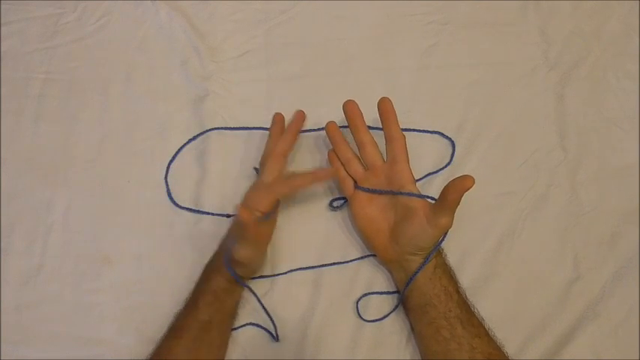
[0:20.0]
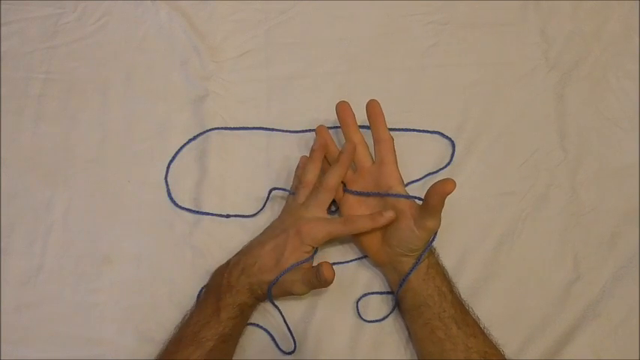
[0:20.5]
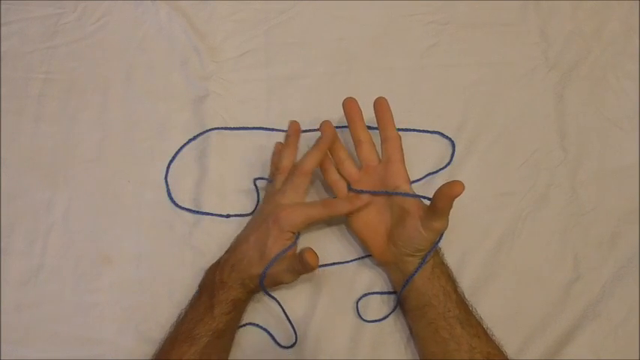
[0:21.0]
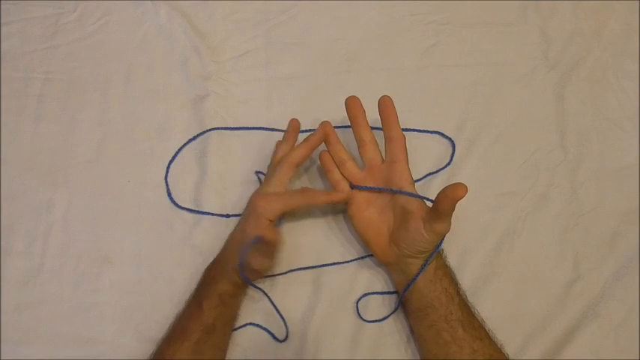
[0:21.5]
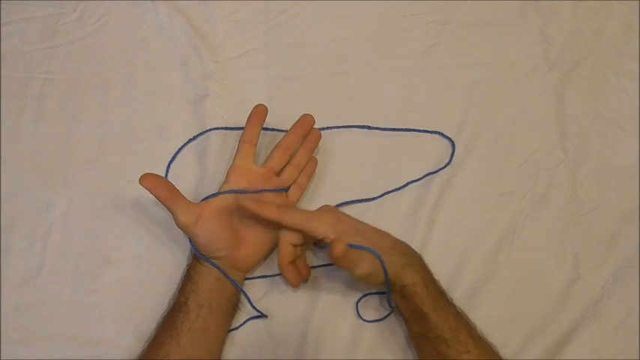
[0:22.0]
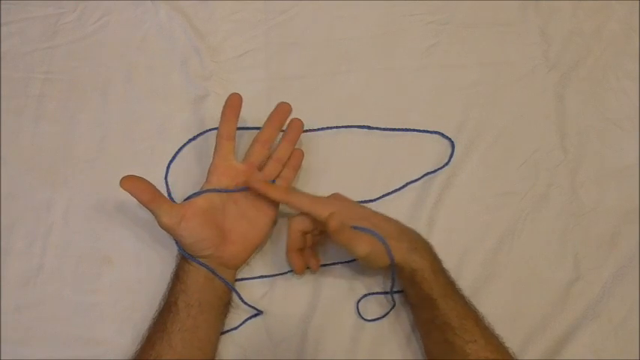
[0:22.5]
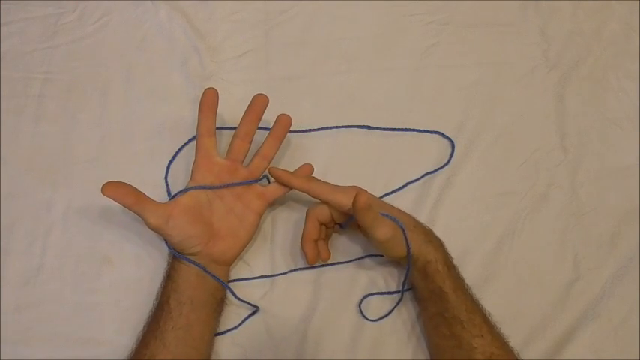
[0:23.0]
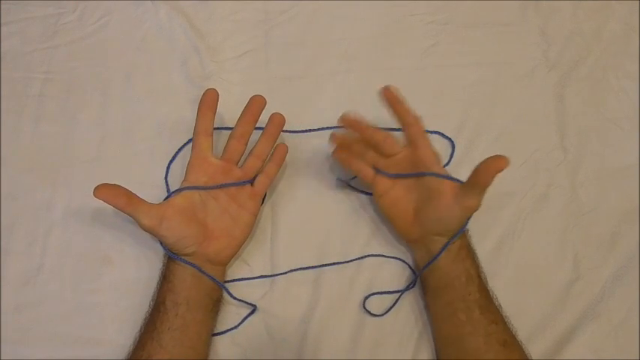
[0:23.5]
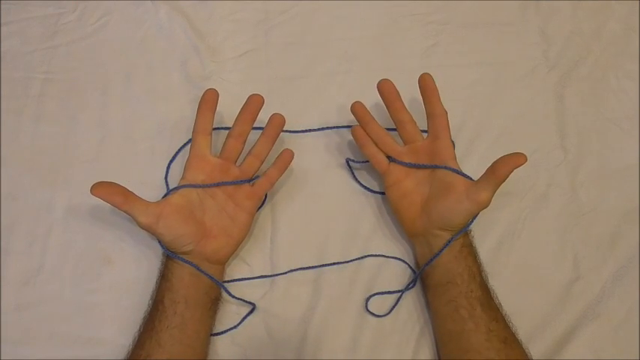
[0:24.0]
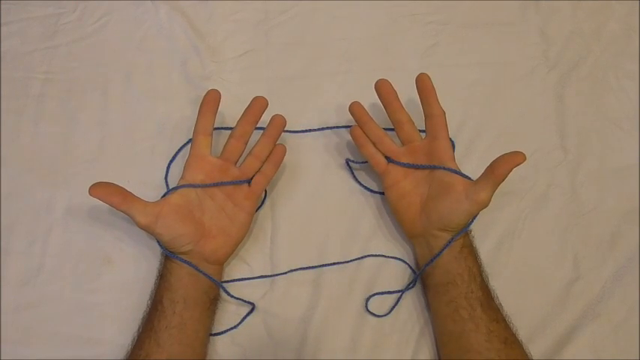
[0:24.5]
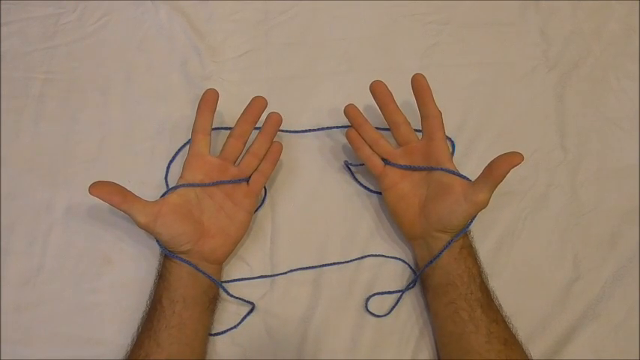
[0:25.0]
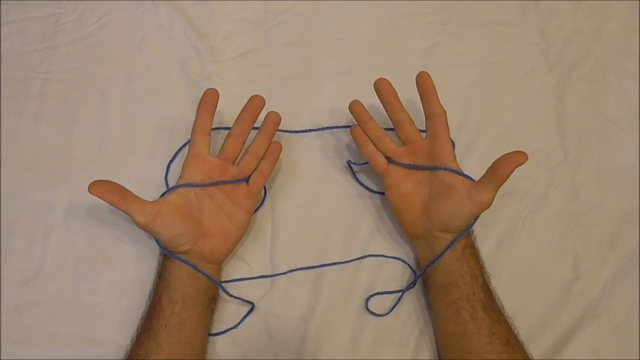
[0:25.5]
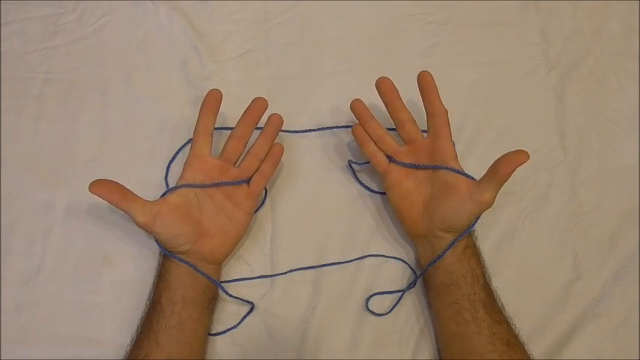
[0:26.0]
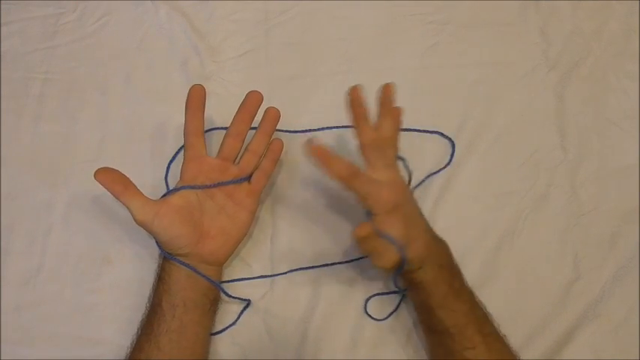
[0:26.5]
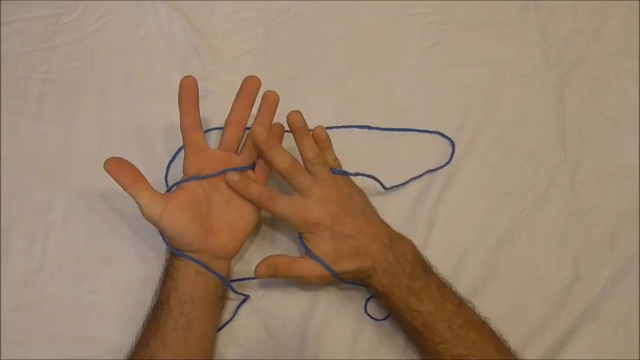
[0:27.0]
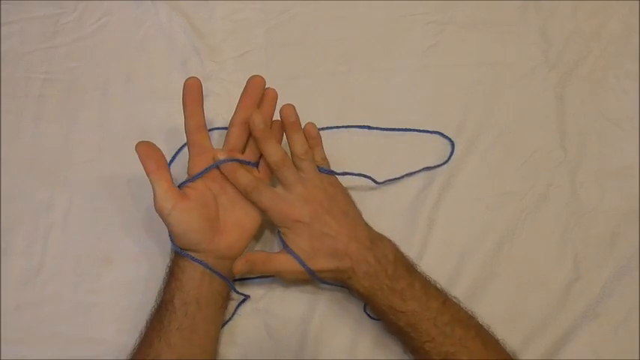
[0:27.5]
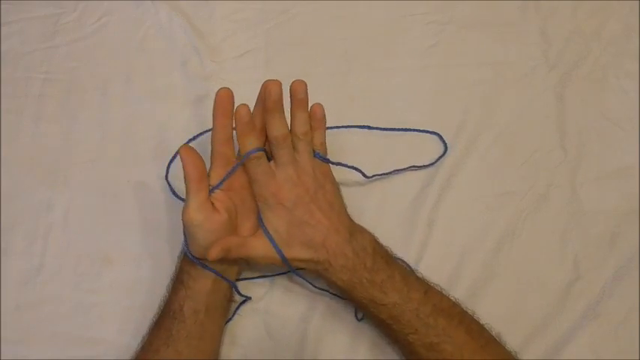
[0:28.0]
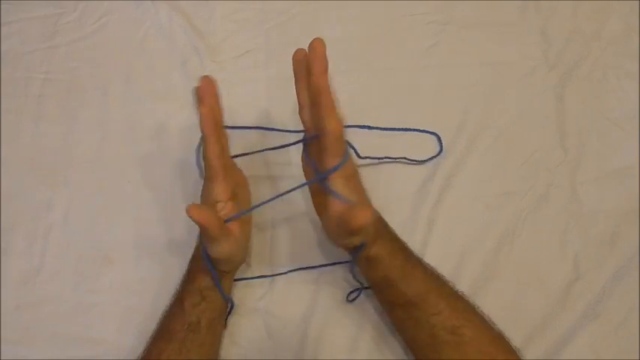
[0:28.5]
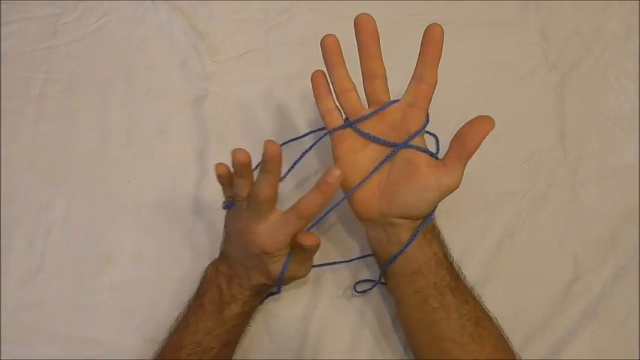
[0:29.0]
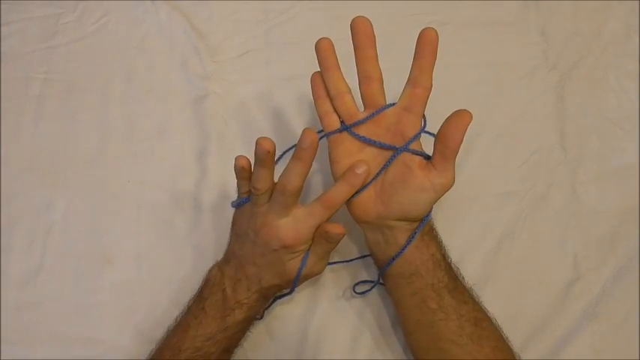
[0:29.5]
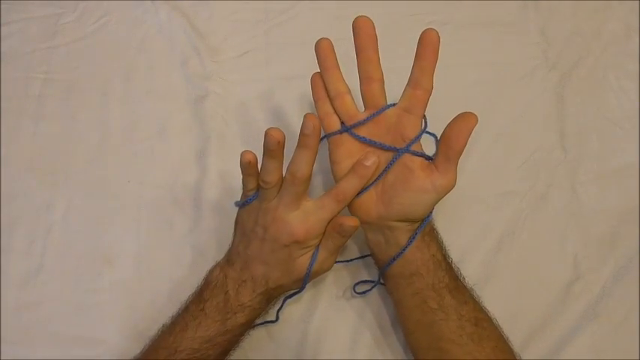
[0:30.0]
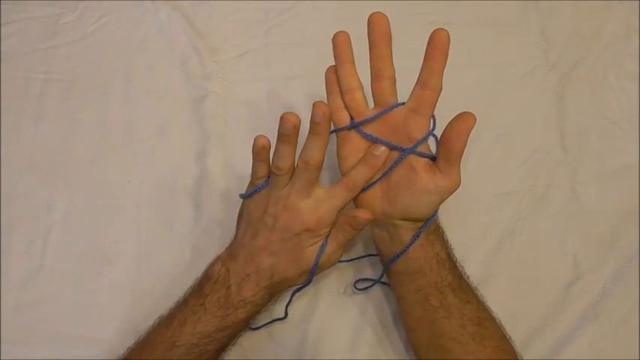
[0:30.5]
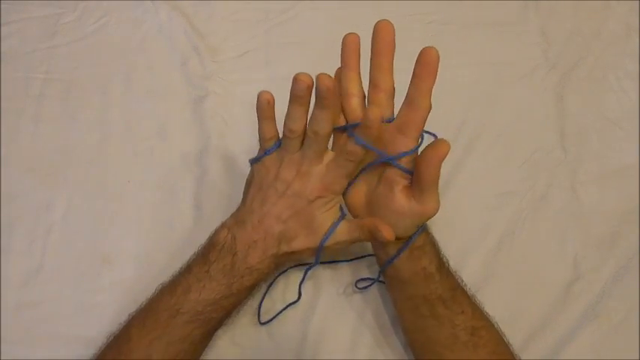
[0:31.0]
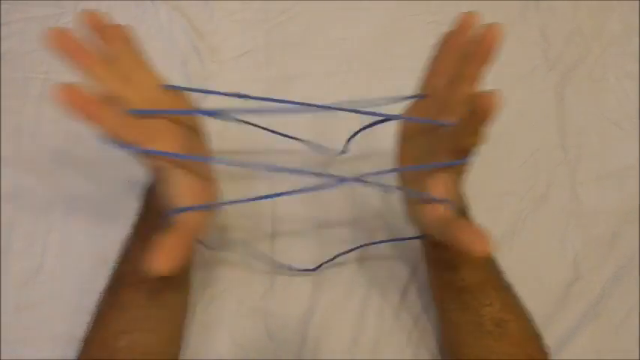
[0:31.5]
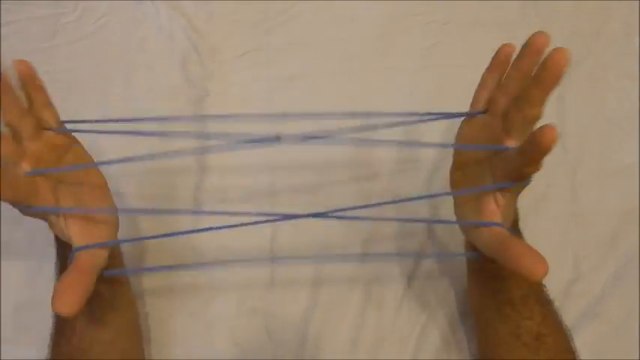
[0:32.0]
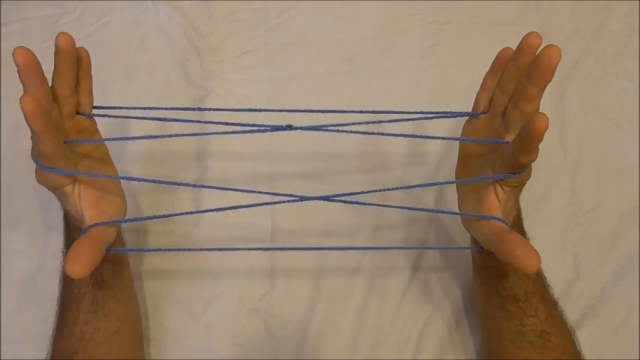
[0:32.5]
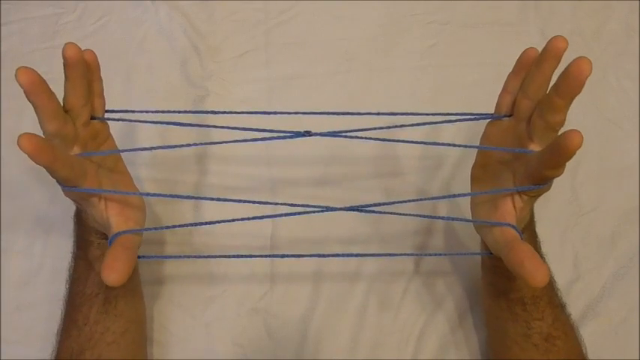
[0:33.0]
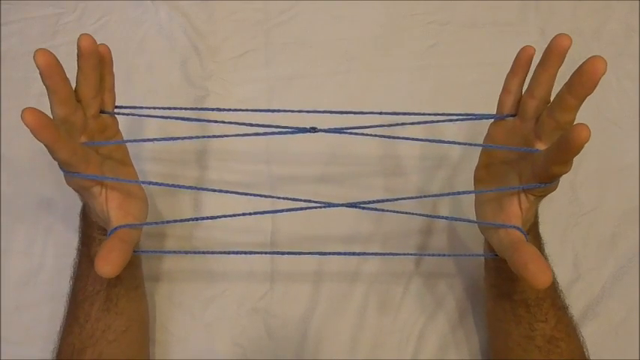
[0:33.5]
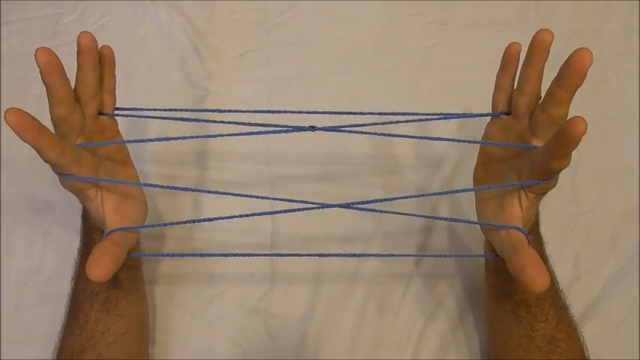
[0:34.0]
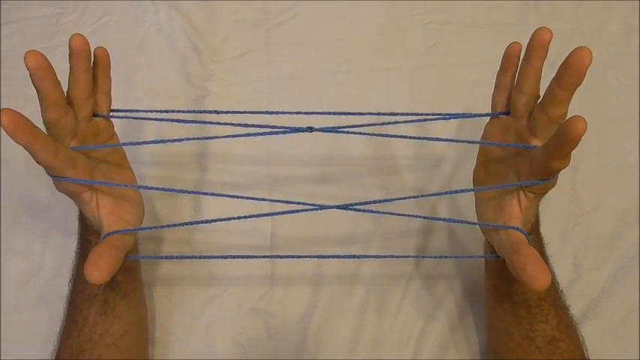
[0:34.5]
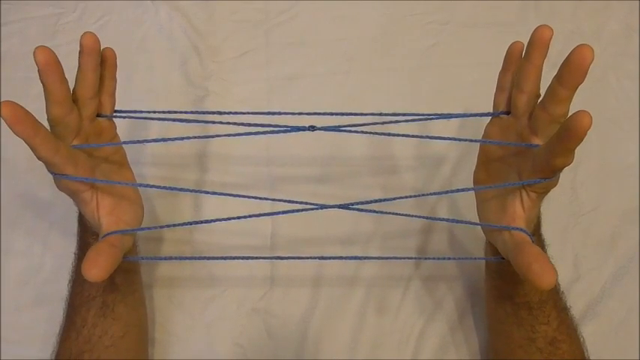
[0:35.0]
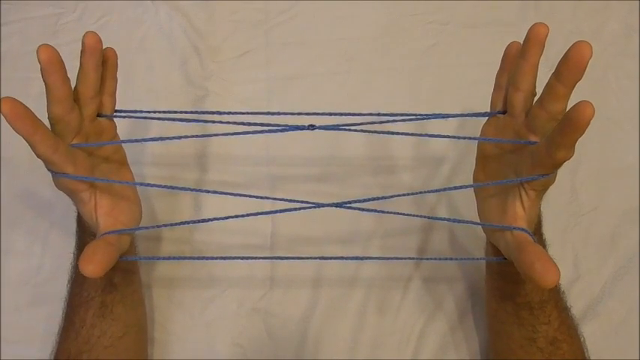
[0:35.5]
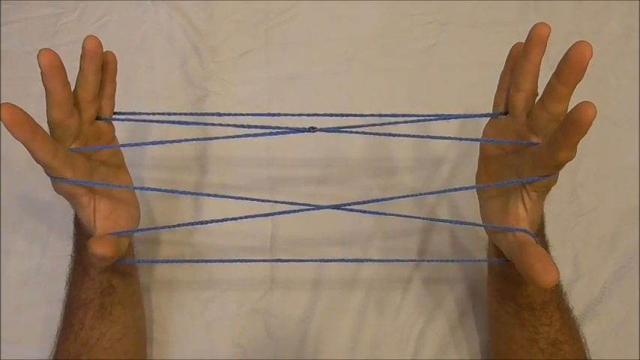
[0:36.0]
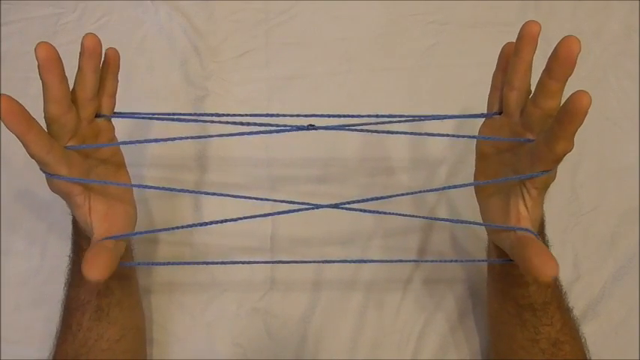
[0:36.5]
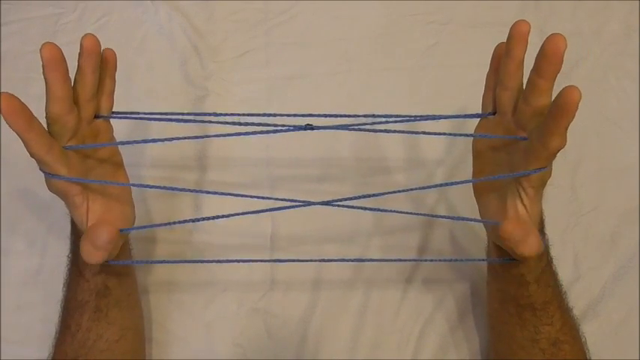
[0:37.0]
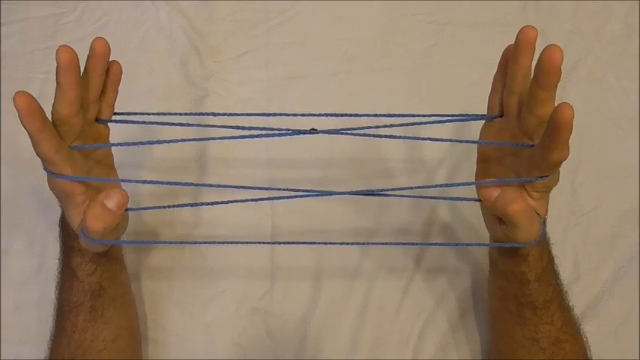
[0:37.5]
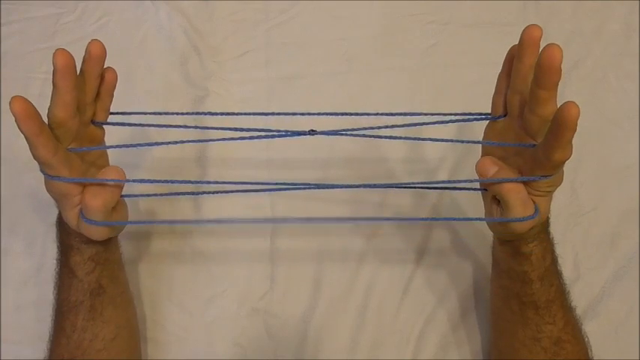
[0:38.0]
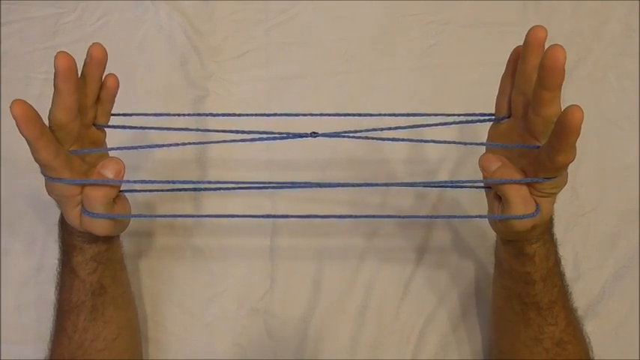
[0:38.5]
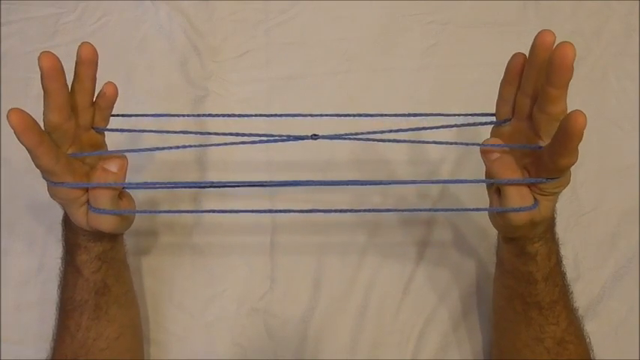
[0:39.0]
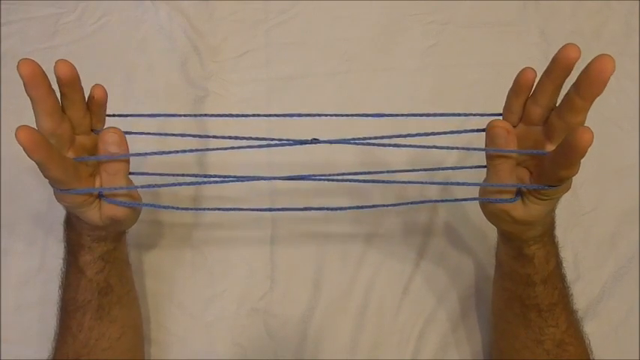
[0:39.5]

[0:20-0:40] The man points with his left hand to the palm of his right hand, then with his right hand to the palm of his left hand. He then uses his right hand to weave the strings into a formation, seemingly teaching viewers how to make the figure. He stretches both hands outright, horizontally straight, with the strings; some of the strings appear to cross each other. He stretches his hands really tight and then kind of releases a little, apparently showing the first basic step to make the shape. The string is blue, set against a white tablecloth that looks like it may be made of vinyl. His hands are fairly medium-sized, with no calluses and fairly smooth palms, and he has hair up to his wrist, up to the thumb area.